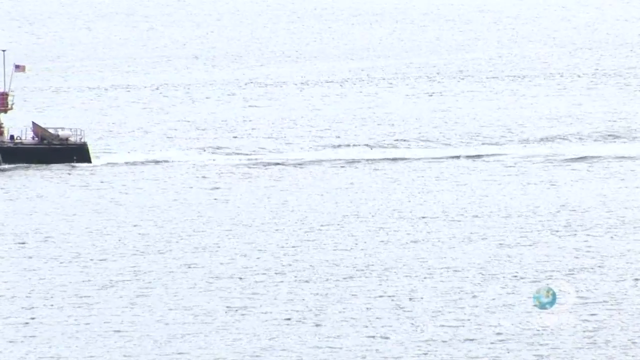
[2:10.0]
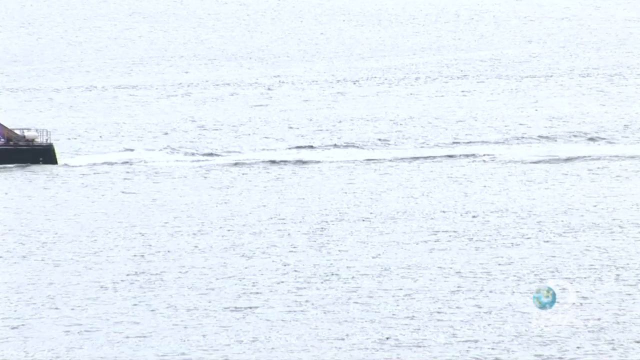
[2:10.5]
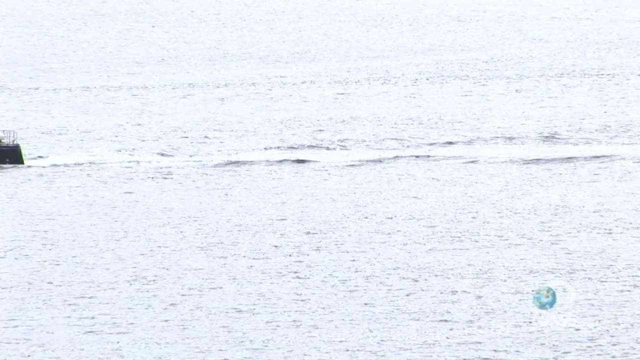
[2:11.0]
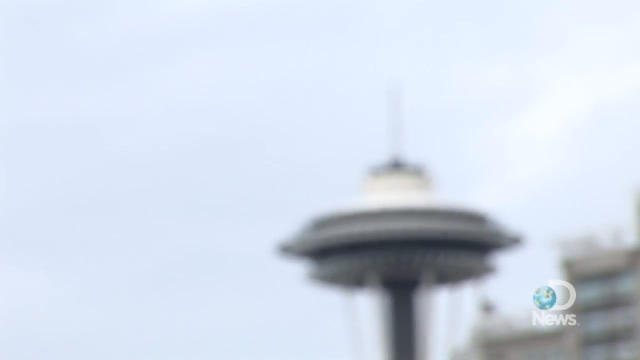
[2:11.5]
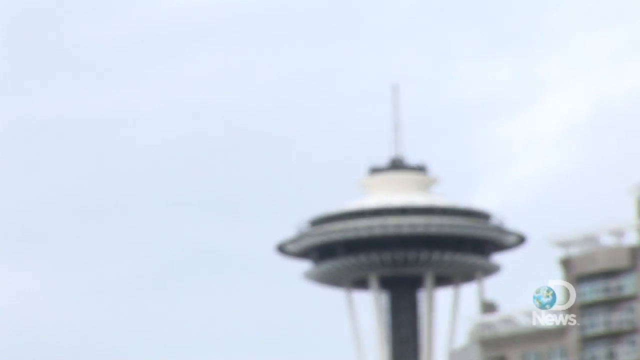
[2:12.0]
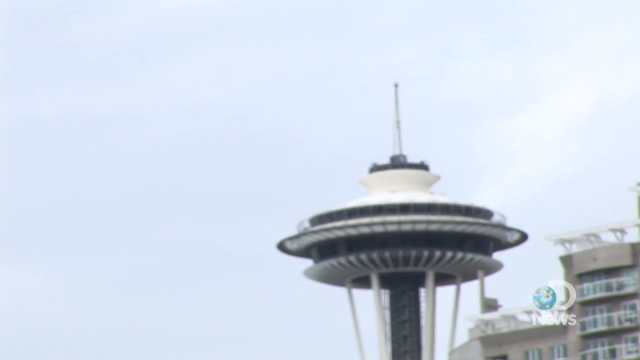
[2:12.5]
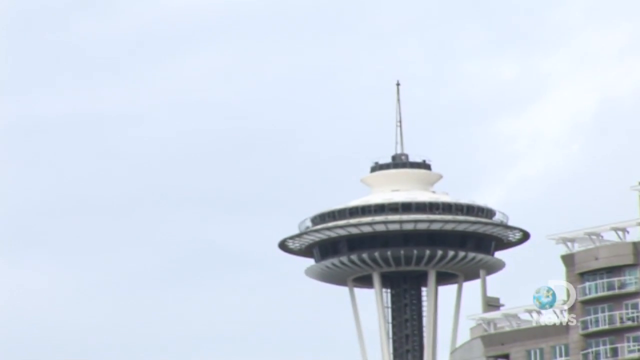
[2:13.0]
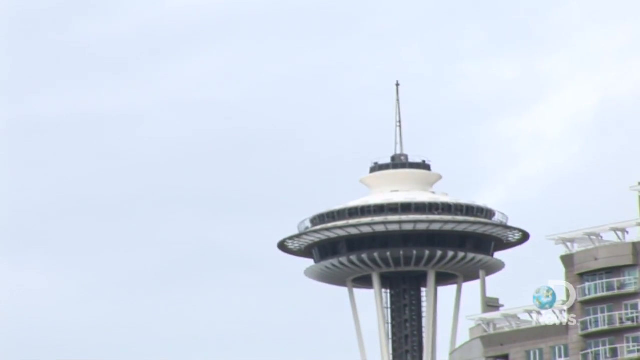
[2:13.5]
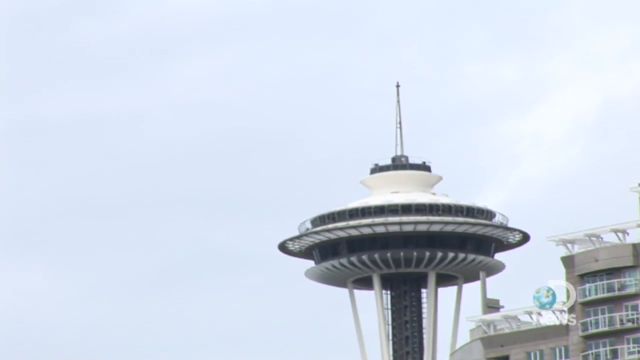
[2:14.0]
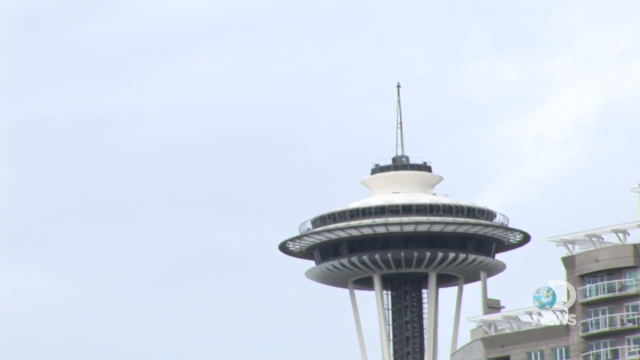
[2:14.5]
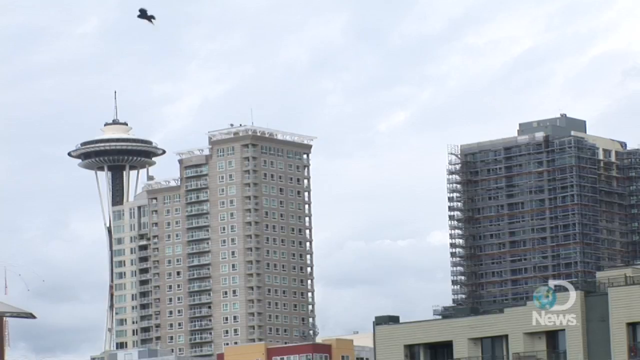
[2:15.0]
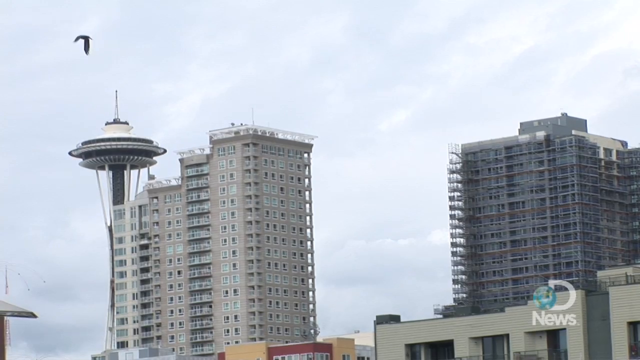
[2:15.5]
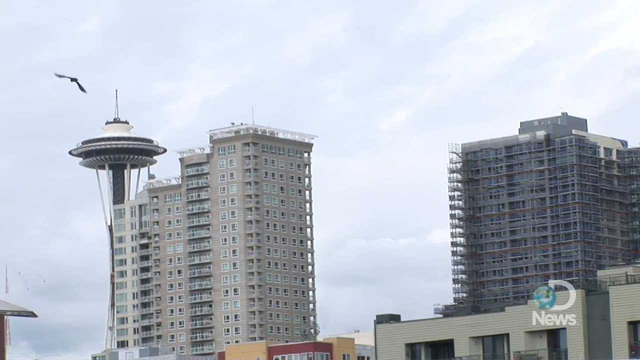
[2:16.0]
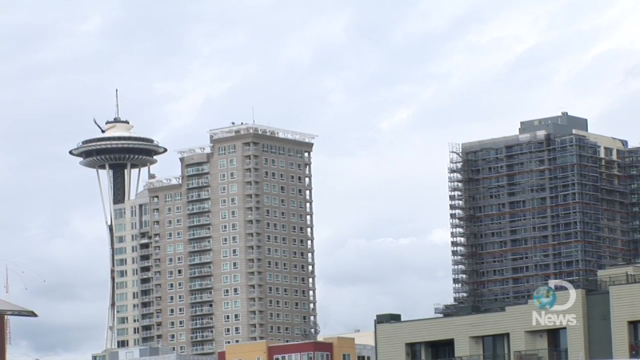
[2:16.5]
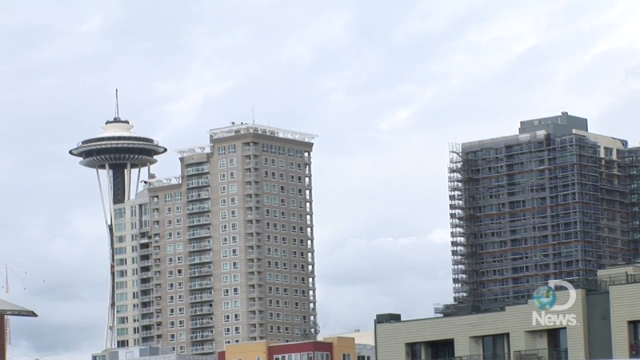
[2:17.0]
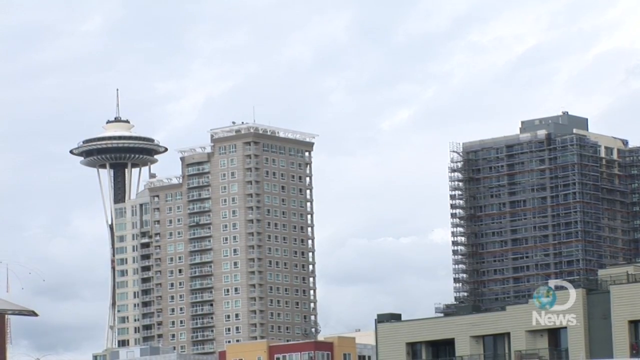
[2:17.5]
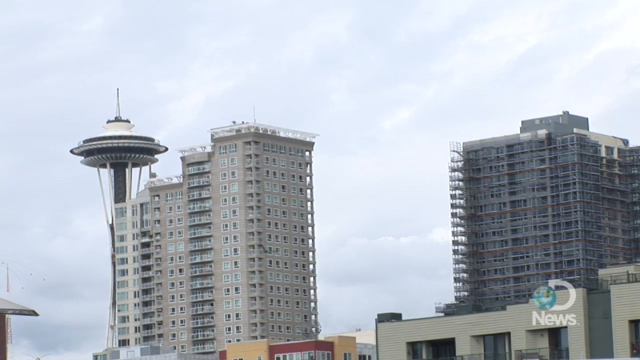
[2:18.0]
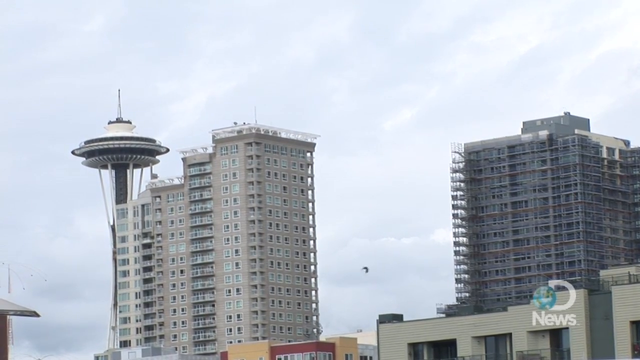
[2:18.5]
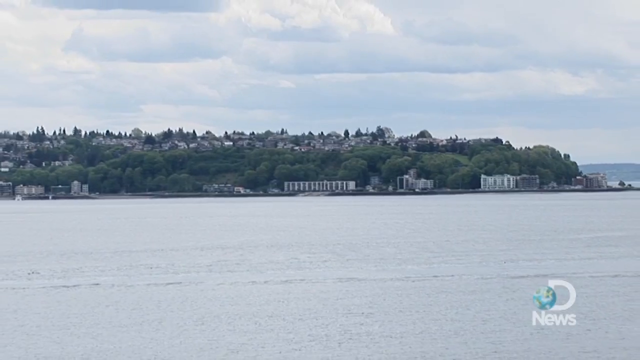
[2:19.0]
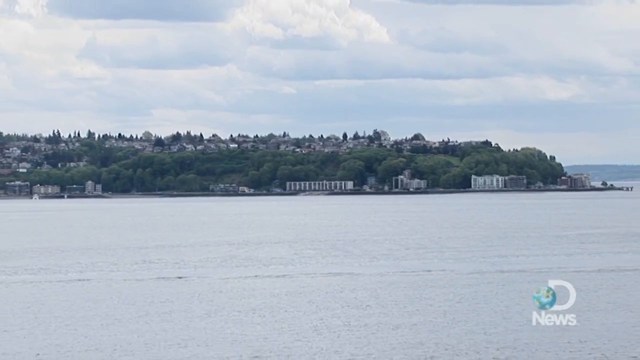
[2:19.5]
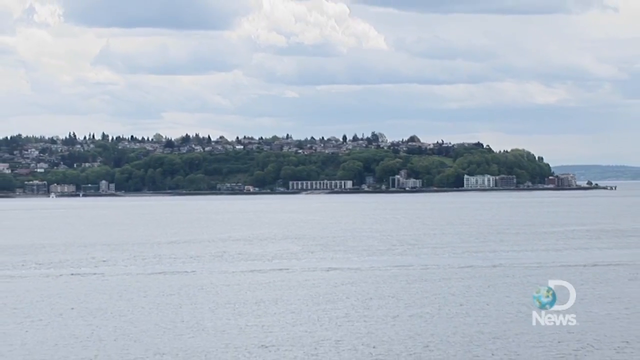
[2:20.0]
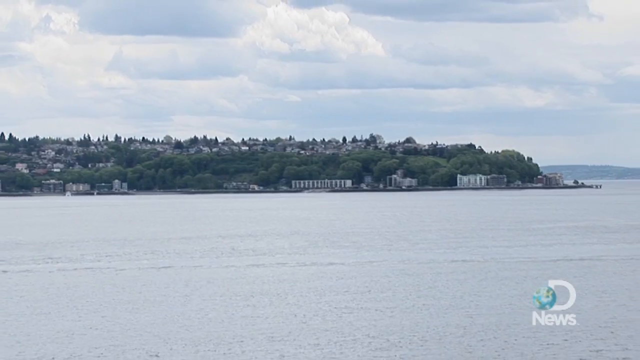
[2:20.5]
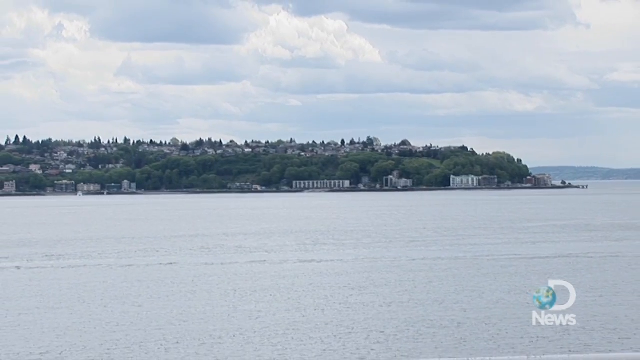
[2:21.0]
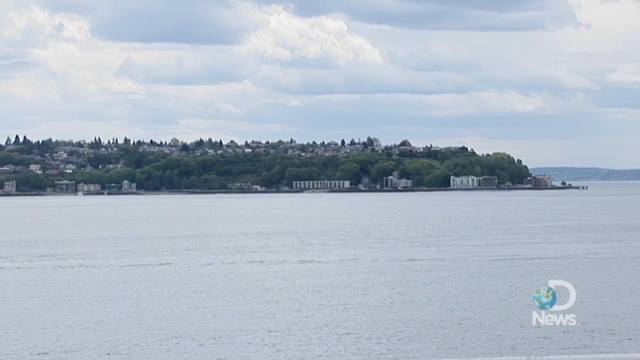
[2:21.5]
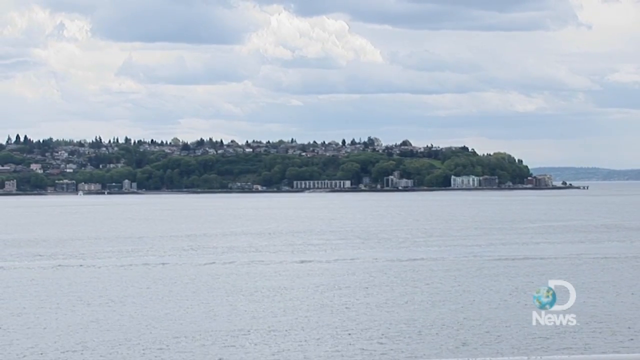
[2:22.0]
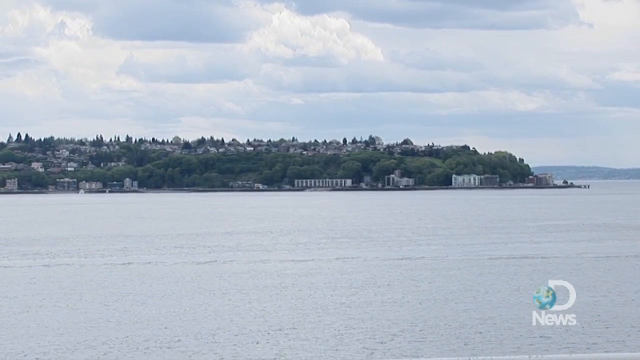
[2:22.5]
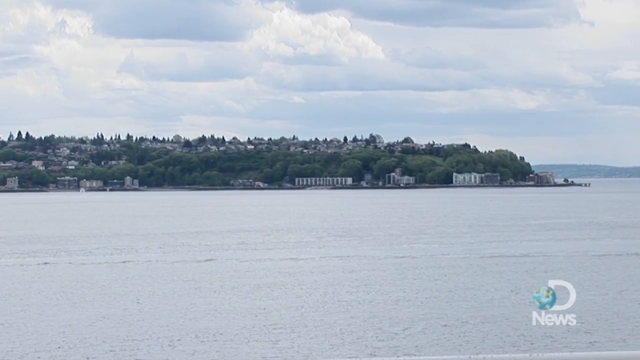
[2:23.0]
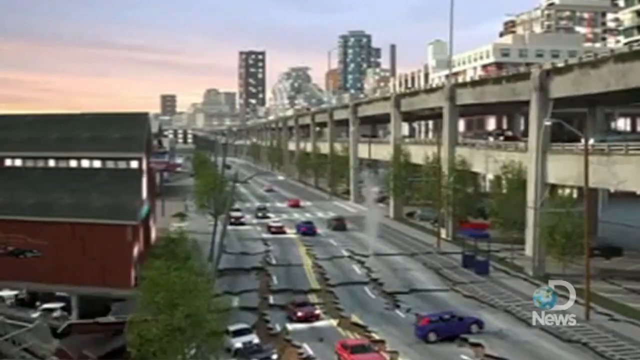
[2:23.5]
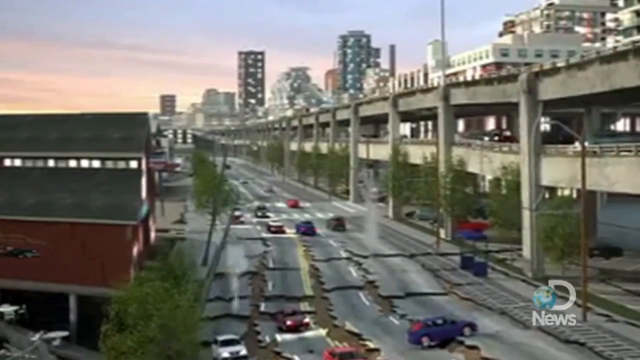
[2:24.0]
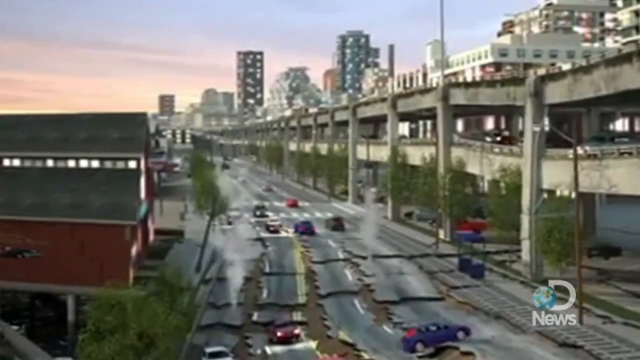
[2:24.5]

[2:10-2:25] The Space Needle in Seattle is shown, along with the tall buildings on the coastline, homes, businesses, highways and many cars in a very heavily populated area. The Seattle skyline appears on a very cloudy day. The roads and bridges buckle, cars fall into the water after the highways buckle beneath them, and the double-decker highway sways back and forth. One bird flies through the air. A close-up shows the Space Needle and the tall buildings surrounding it.